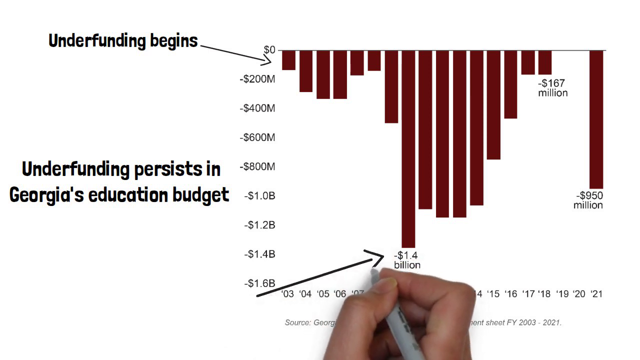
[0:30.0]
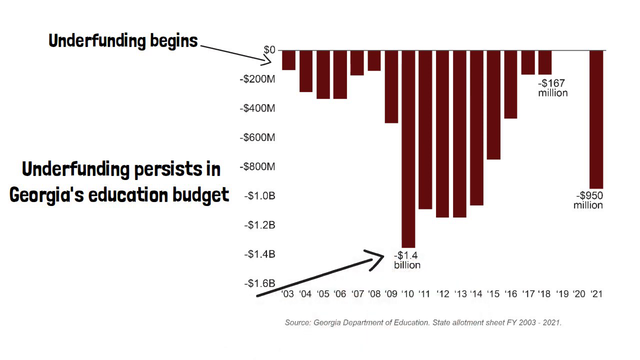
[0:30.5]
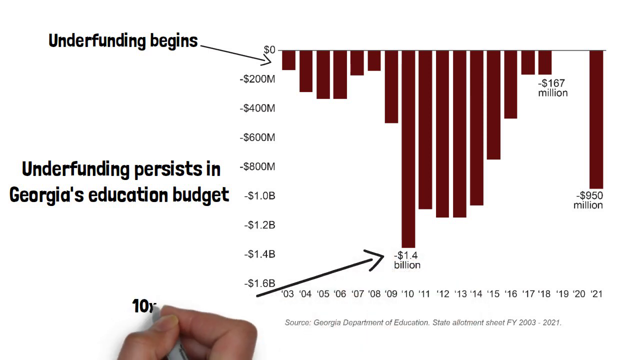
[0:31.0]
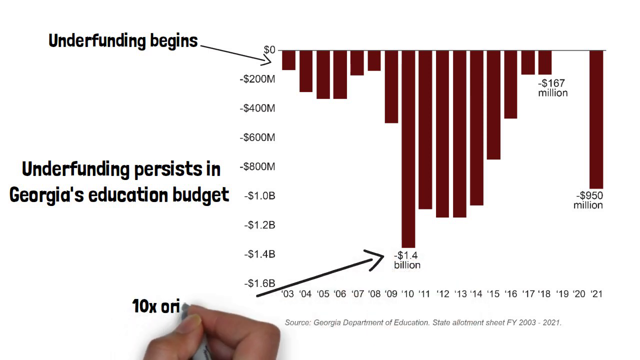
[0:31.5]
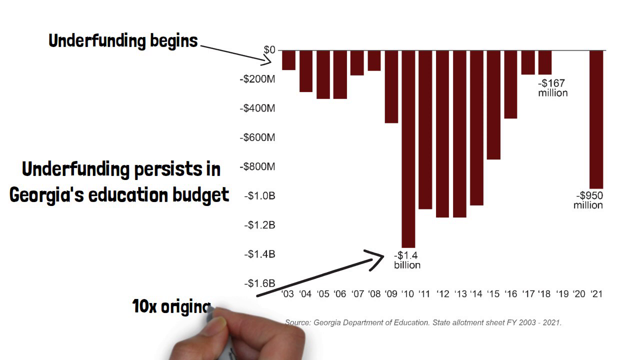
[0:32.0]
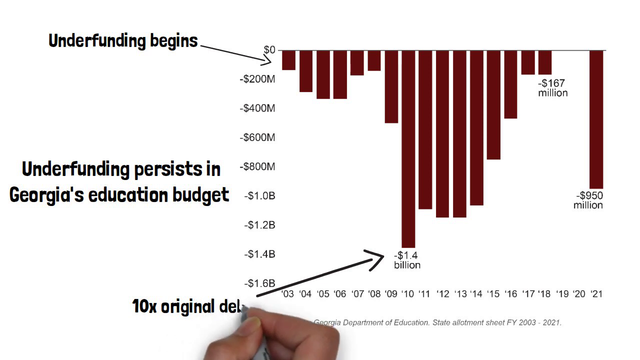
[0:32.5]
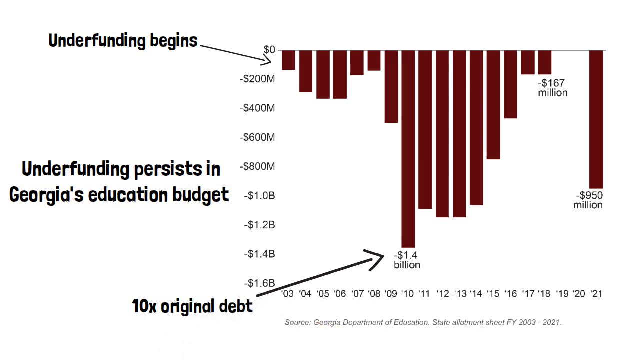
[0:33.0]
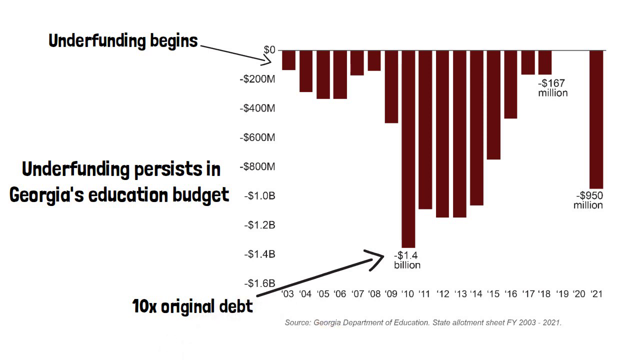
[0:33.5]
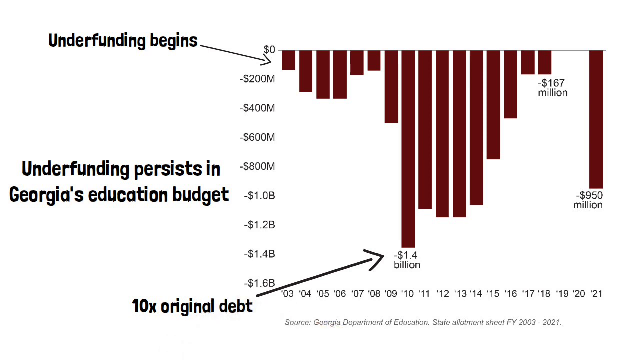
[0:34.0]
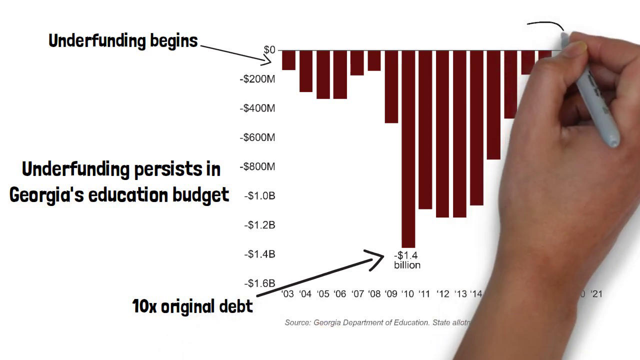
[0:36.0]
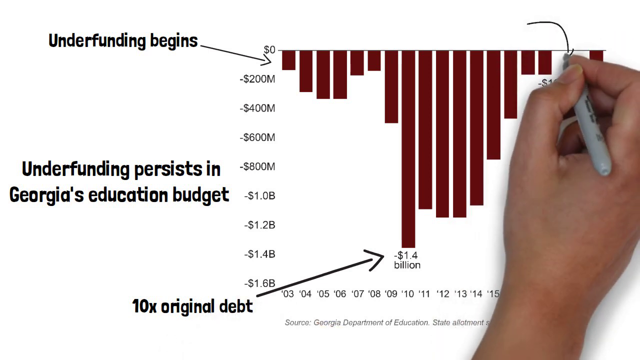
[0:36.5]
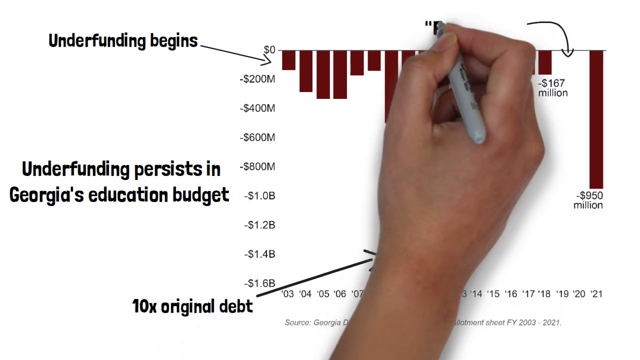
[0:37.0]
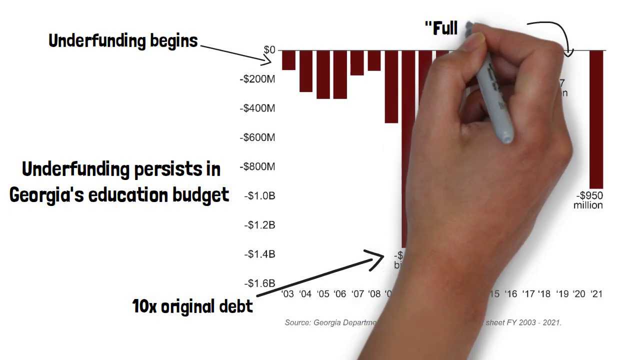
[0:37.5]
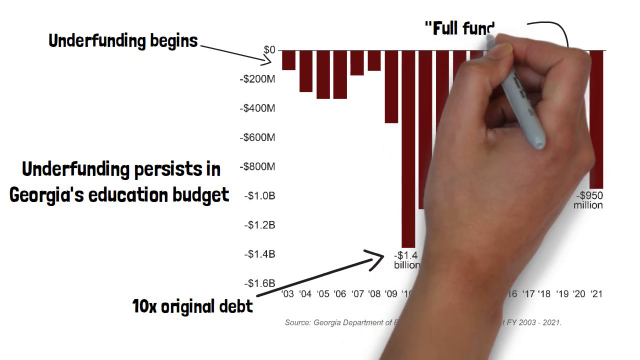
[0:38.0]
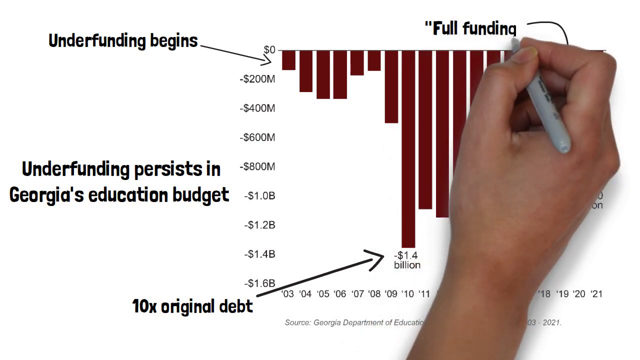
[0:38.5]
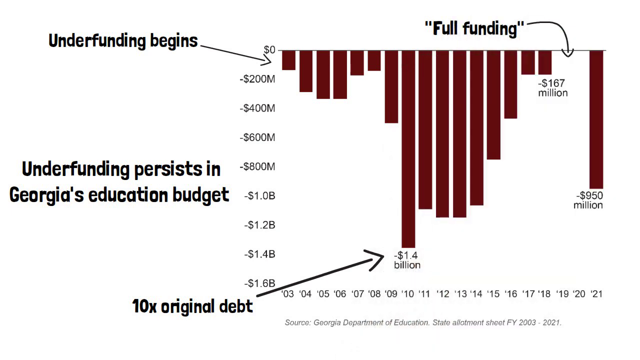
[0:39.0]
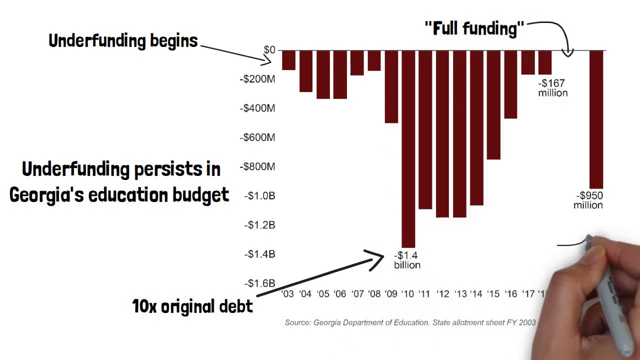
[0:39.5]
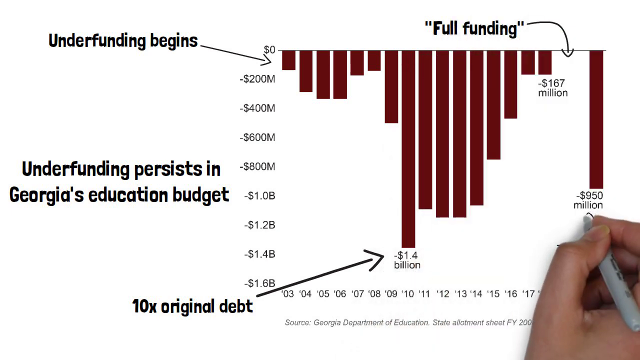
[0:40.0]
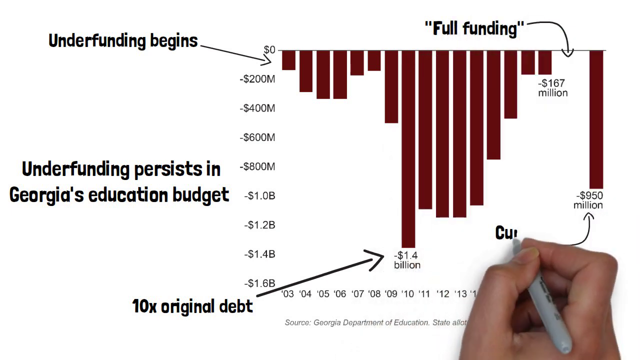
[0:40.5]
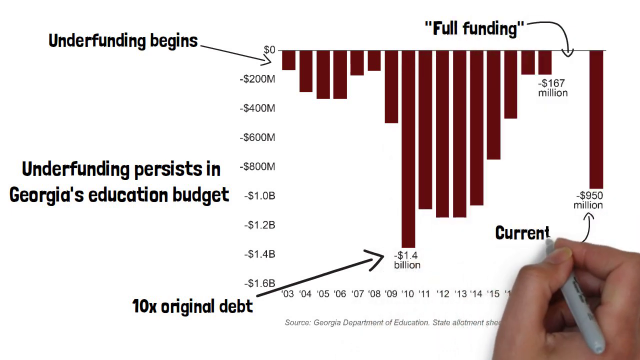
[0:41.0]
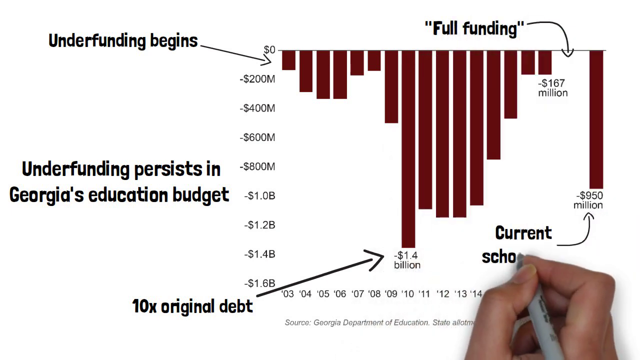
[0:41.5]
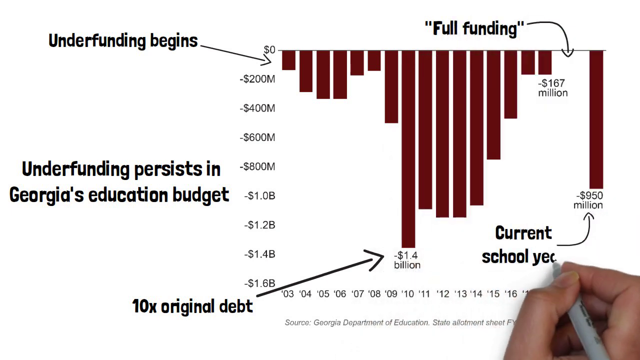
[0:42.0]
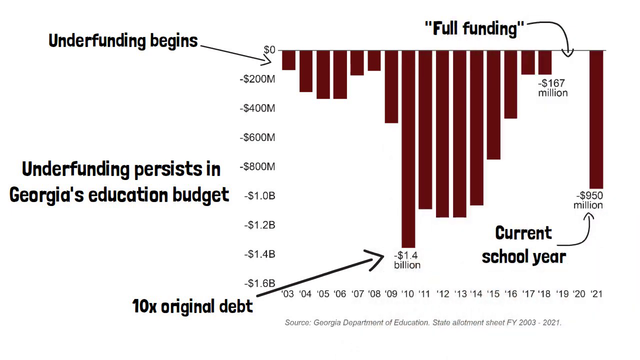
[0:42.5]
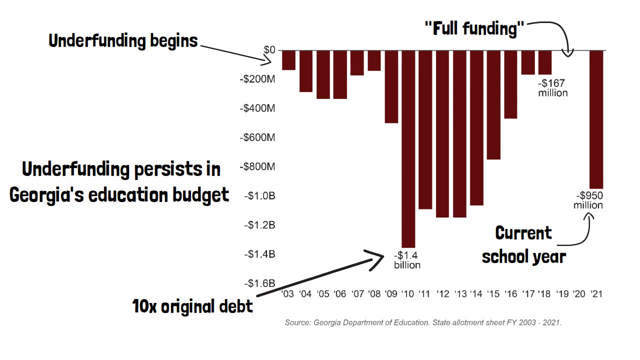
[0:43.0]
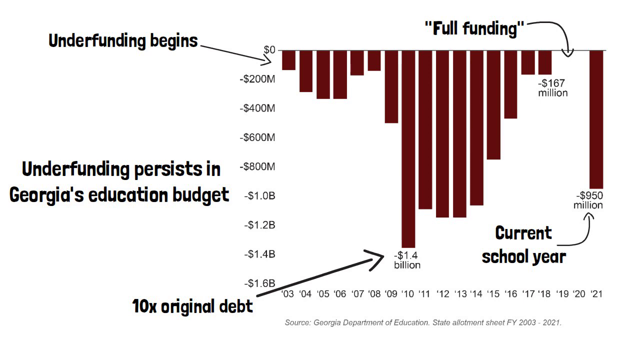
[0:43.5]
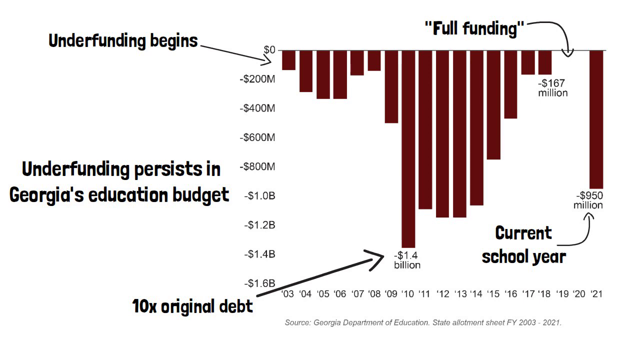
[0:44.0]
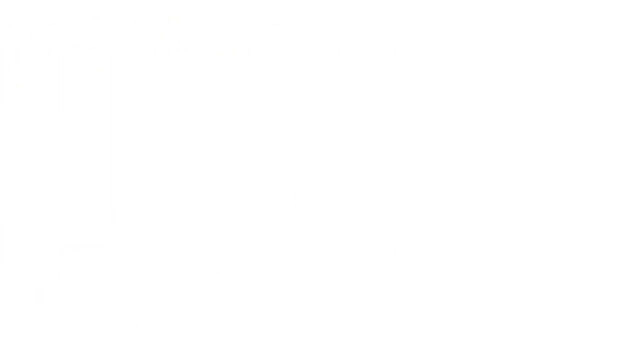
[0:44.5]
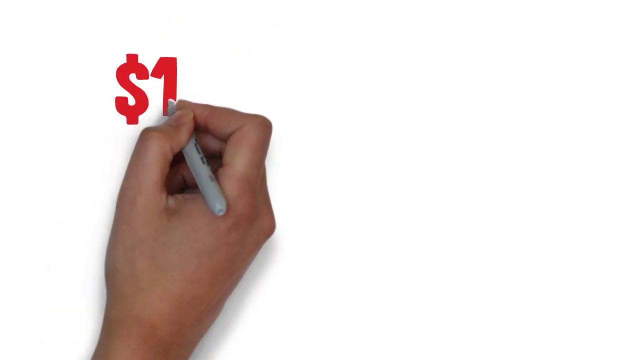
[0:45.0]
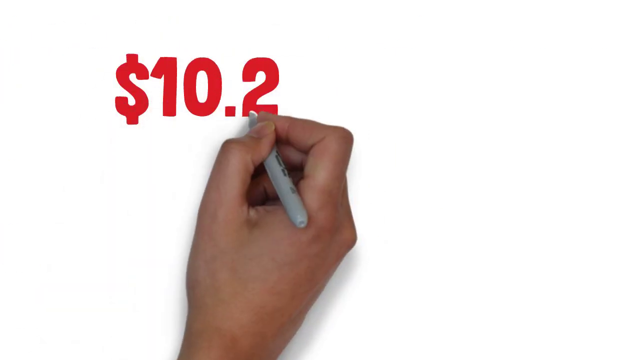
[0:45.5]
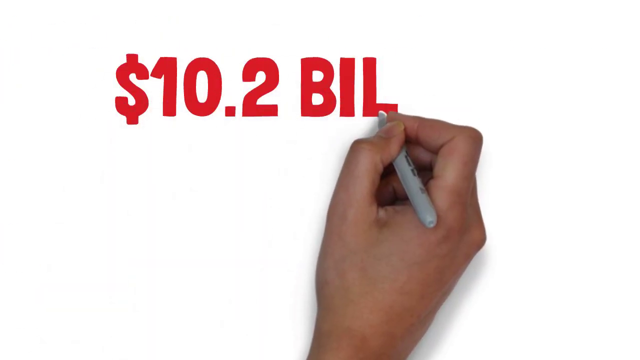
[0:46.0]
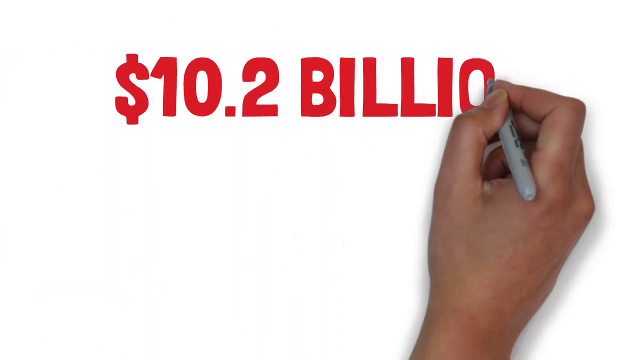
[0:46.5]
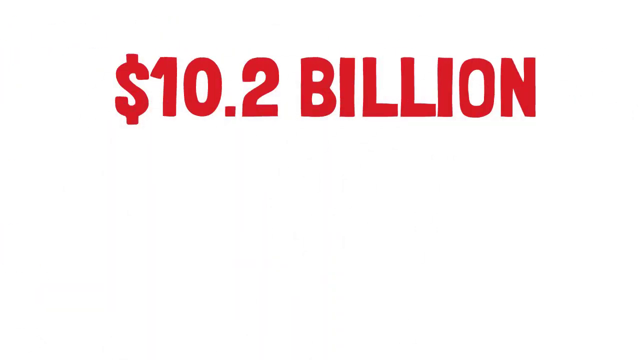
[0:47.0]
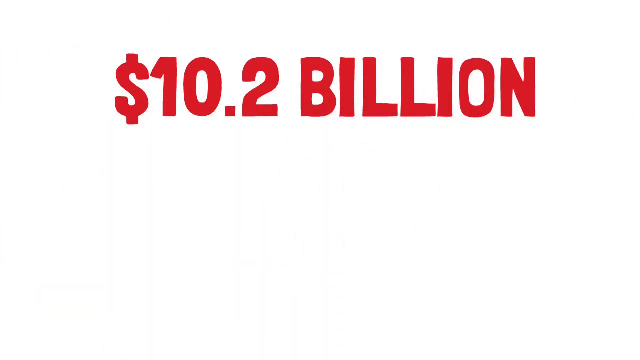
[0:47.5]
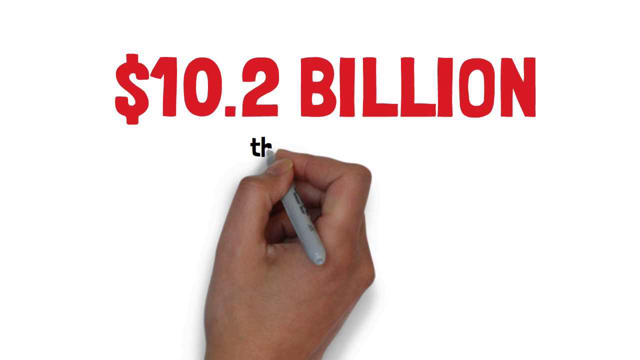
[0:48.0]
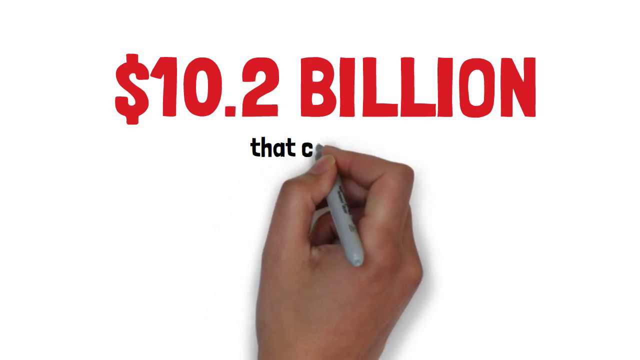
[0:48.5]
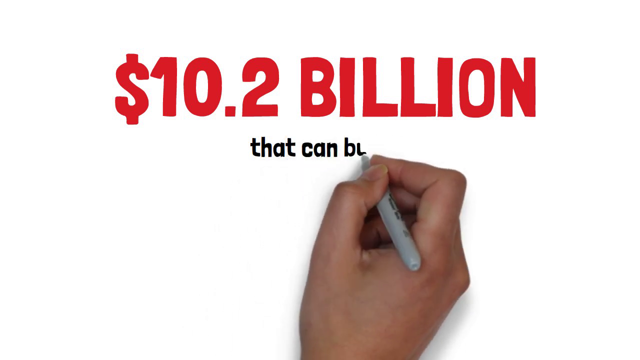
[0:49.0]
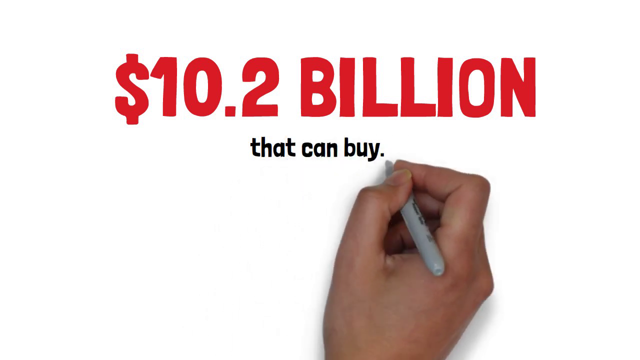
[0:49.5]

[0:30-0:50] The hand with the marker leaves the bottom of the screen, then comes up again and writes "10x original debt" beside the bottom arrow. The hand comes up from the bottom right and draws another arrow at the top right of the graph, pointing down to an empty area, and writes "full funding" in quotation marks beside it. It then draws another arrow pointing at the farthest right bar on the graph and writes "current school year" beside that arrow. The screen turns white, and the hand writes "10.2 billion dollars" in red text in the middle of the screen. Below that, it writes "that can buy" in small black letters, and the shot ends abruptly.